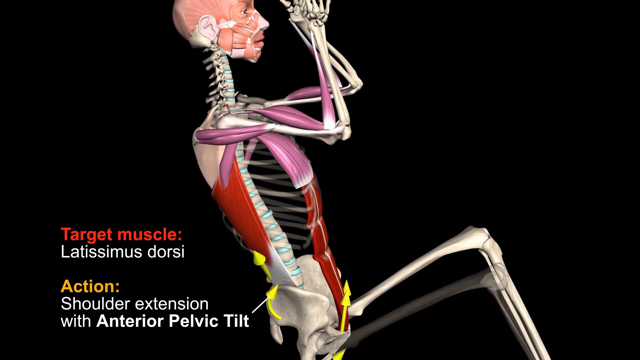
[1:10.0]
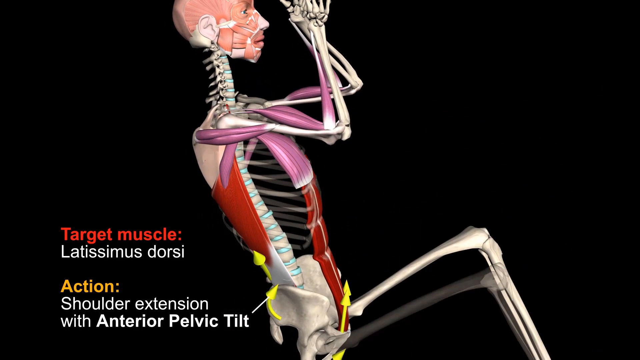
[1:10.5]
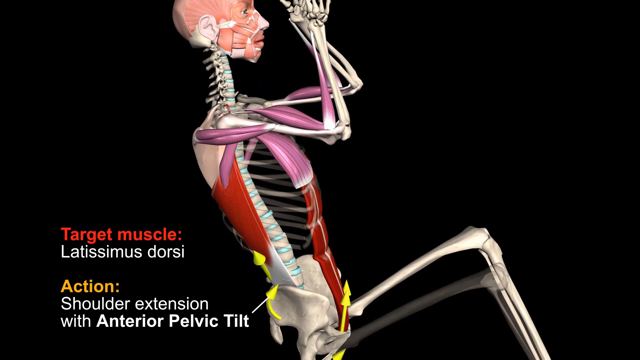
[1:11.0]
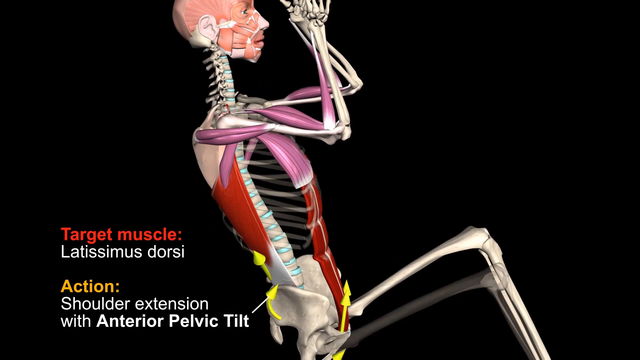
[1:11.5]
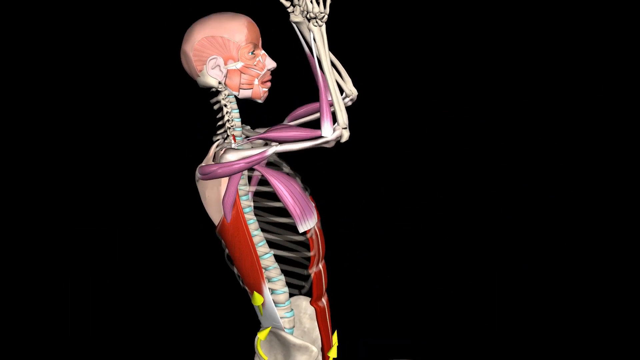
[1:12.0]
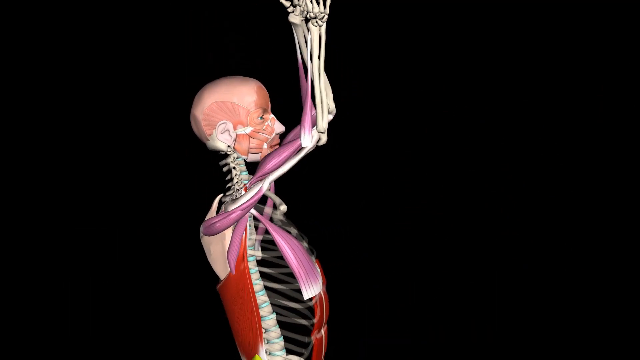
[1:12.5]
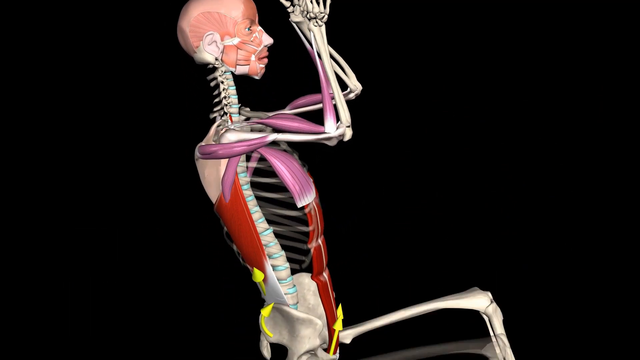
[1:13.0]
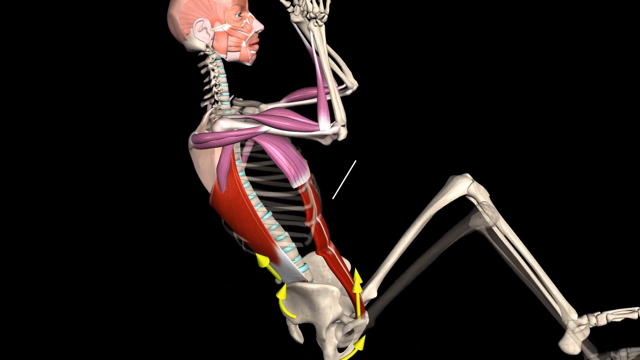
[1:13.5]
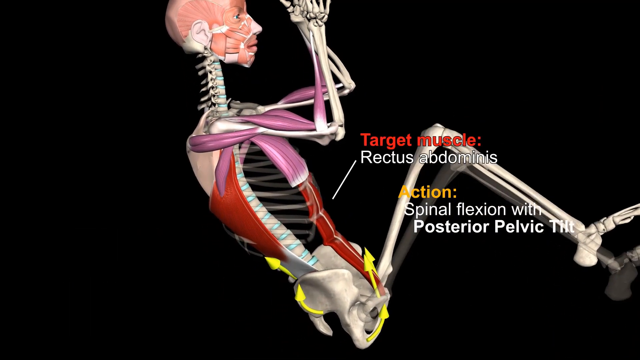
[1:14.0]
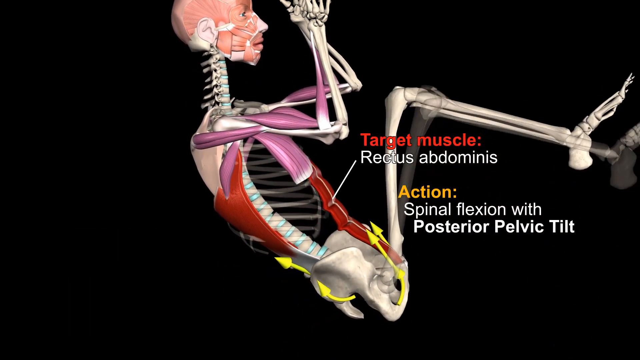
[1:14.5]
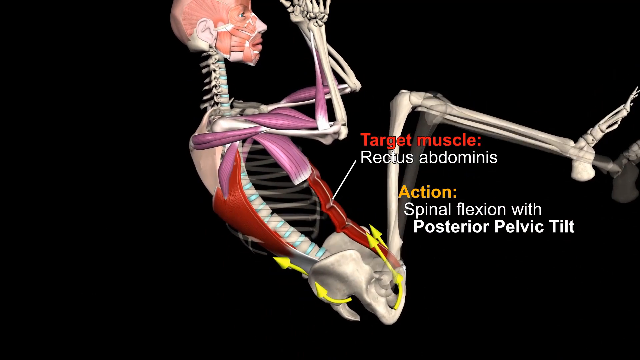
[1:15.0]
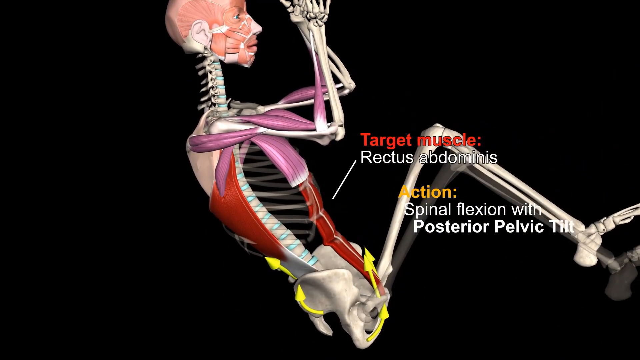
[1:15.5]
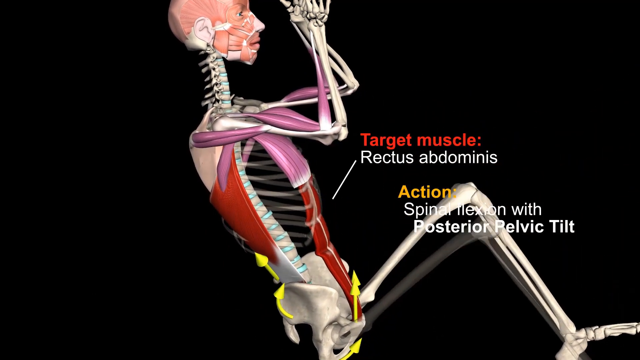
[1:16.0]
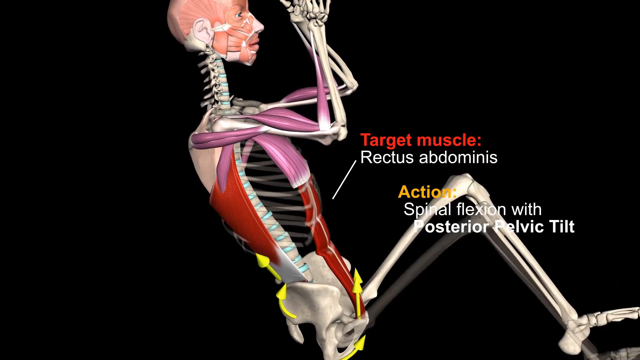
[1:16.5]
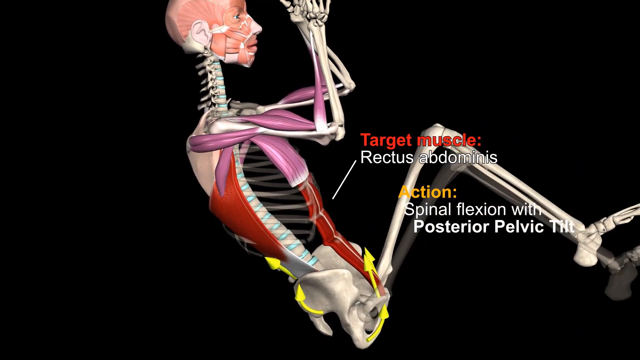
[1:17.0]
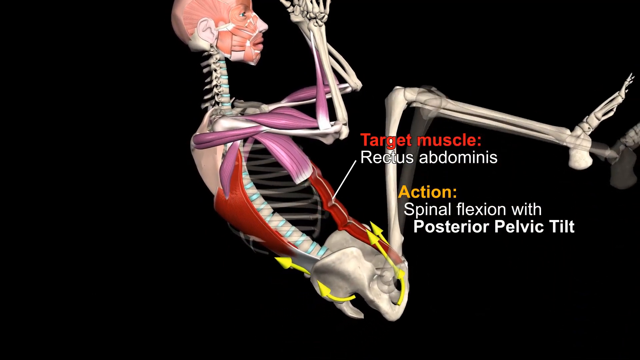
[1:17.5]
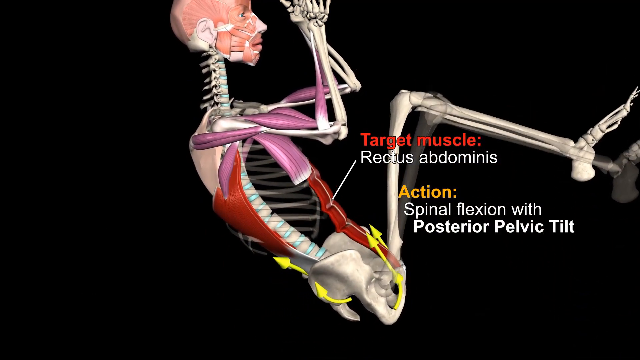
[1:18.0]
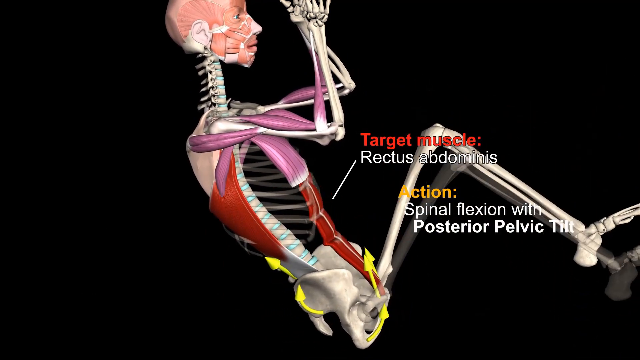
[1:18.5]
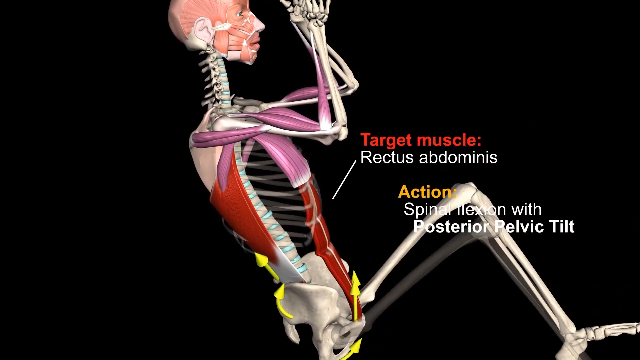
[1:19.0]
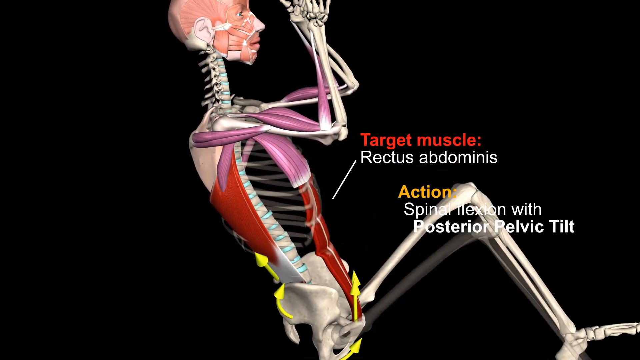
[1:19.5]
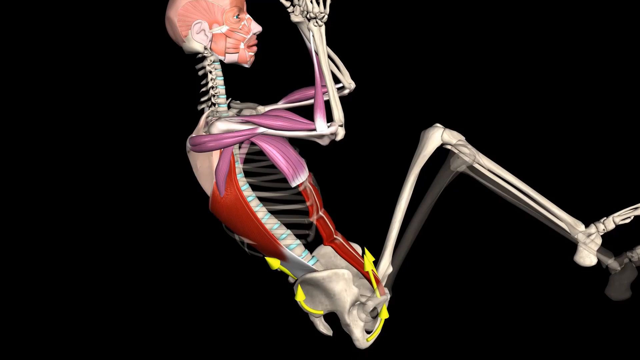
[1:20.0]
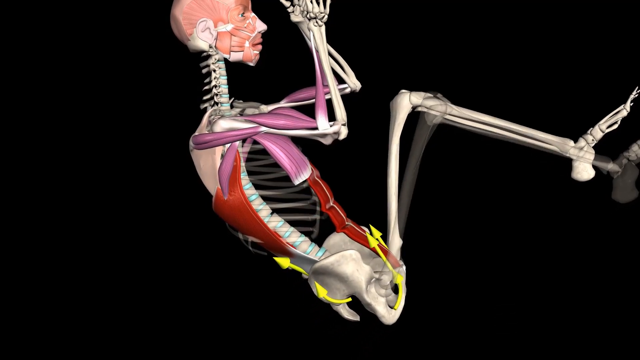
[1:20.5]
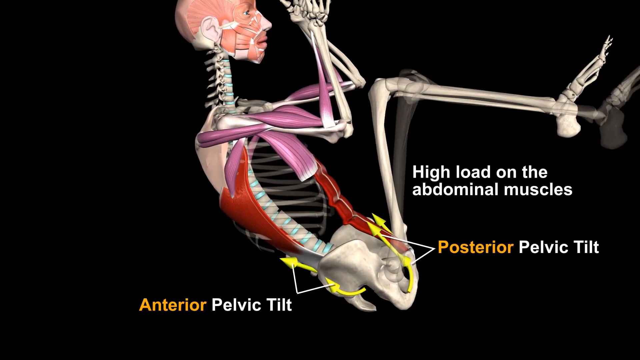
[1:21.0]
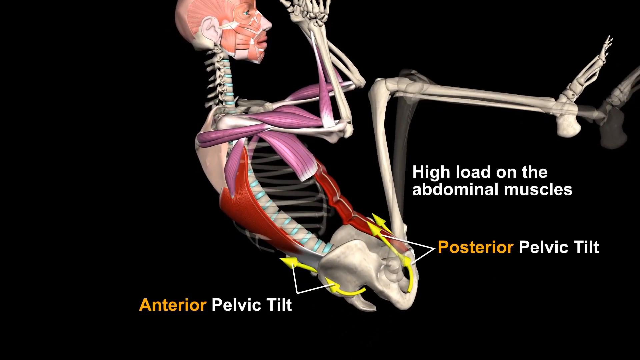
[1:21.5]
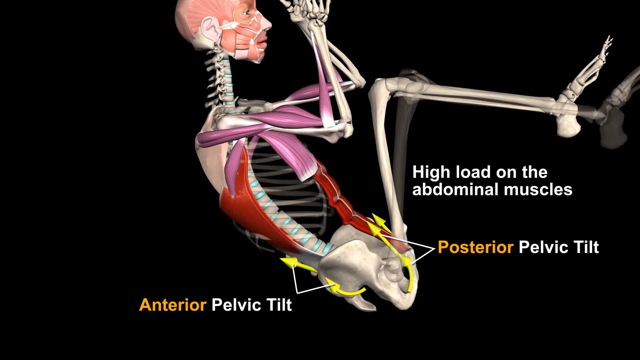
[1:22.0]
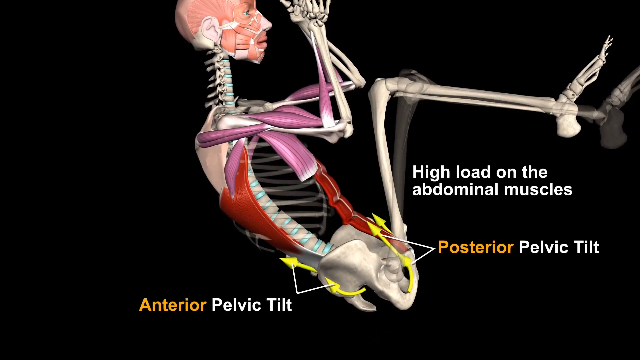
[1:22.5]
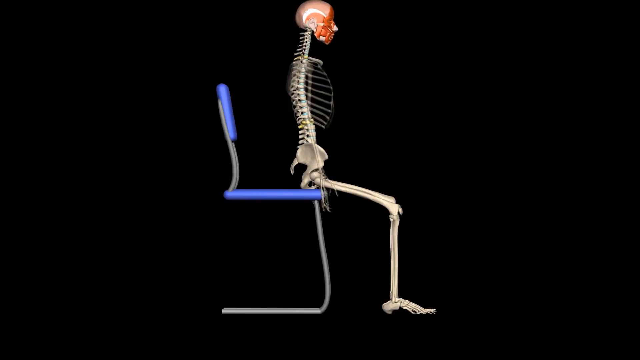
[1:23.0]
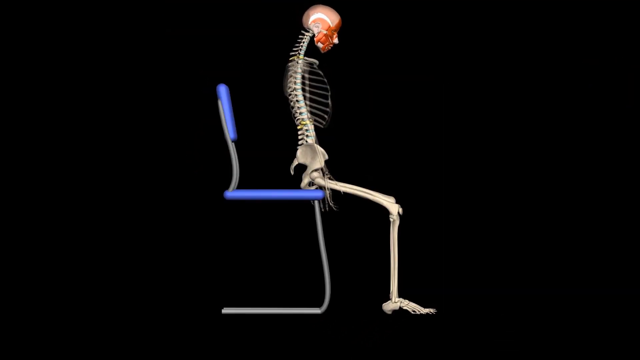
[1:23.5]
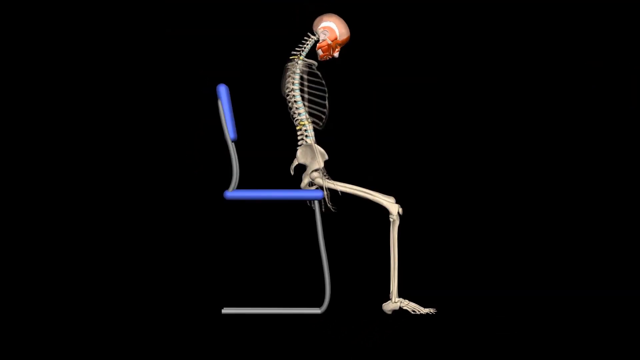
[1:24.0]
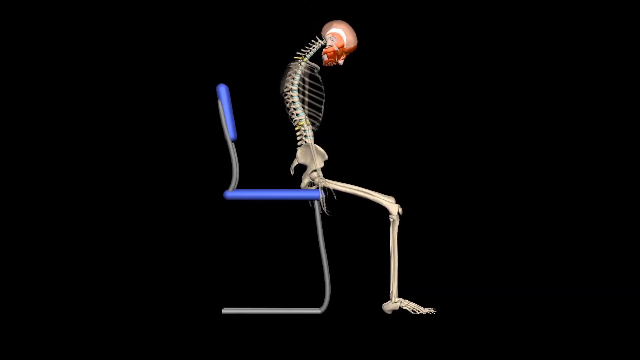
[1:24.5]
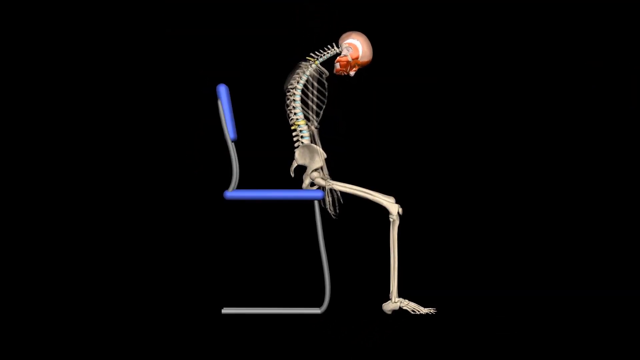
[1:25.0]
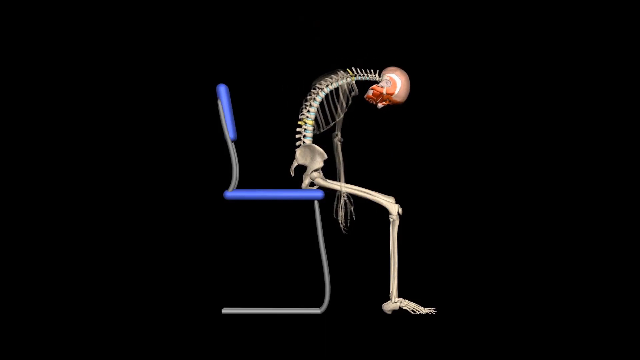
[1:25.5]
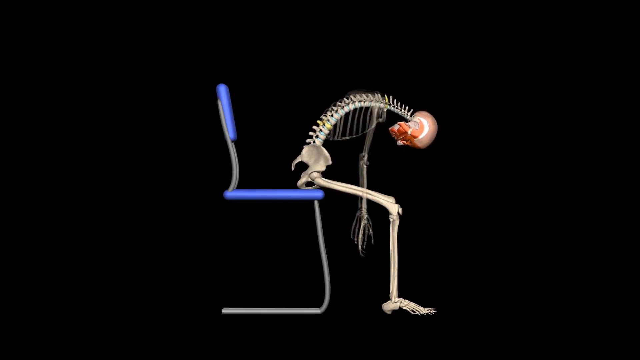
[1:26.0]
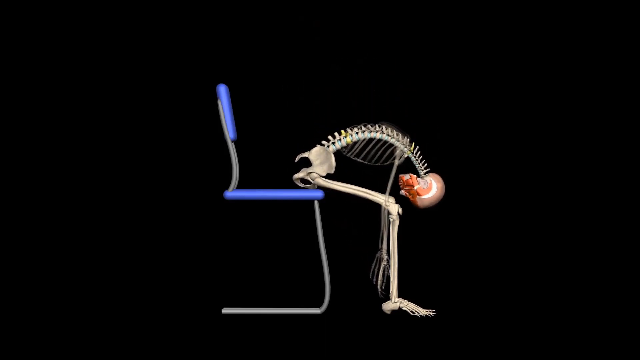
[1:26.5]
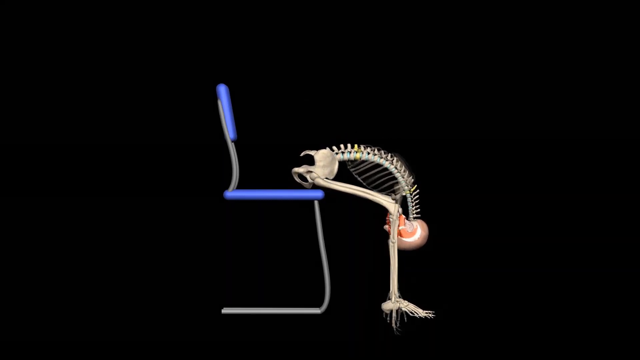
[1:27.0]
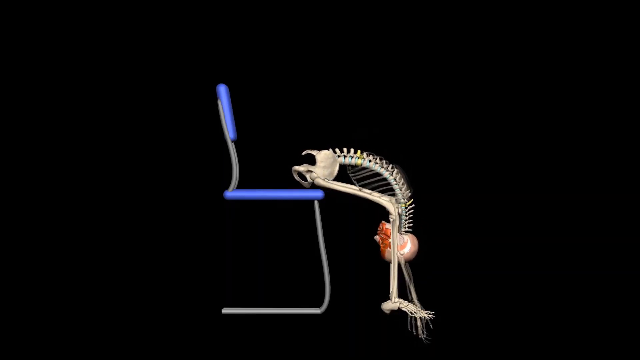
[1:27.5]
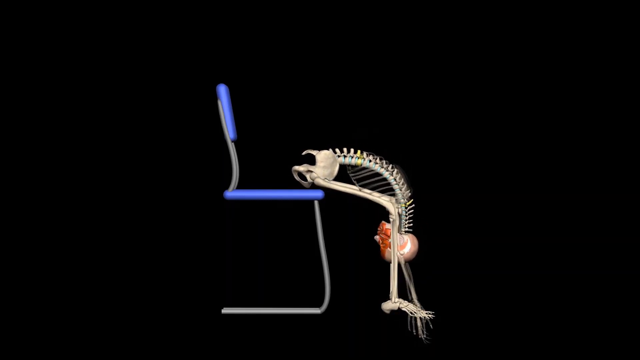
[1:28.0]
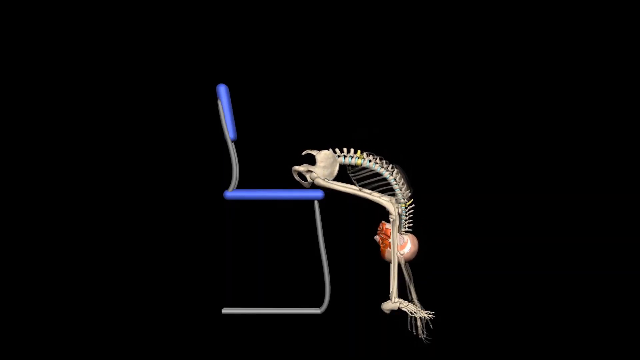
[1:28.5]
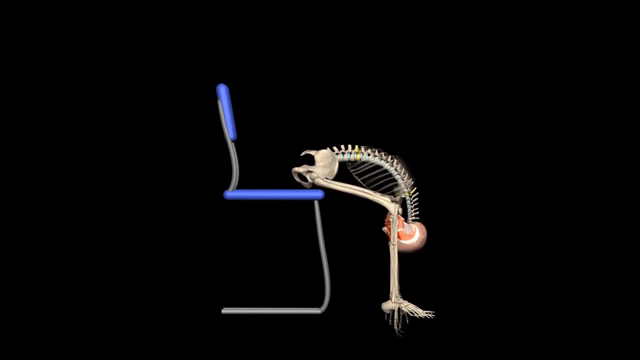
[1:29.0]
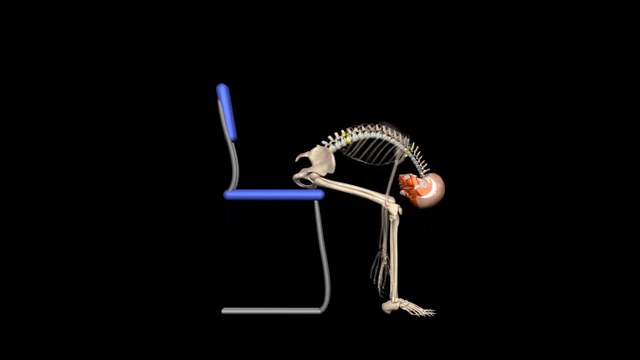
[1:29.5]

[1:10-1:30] A 3D computer-generated skeleton does a pull-up, holding on to a bar that is not quite visible at the top of the screen. It pulls itself up, bending its elbows and bending its knees so far that they almost touch its elbows. It then lowers itself and repeats the action over and over. Another shot then shows a skeleton sitting in a chair. This skeleton is almost all bones: the ribcage, spine, pelvis, leg bones and arm bones are visible, while the skull has muscles depicted on it in pink and red, and the nose is visible too. The chair has a gray back, gray legs and blue cushions, and the background is completely black. The skeleton sits upright on the very edge of the chair, then bows its head and kind of starts to lean forward with its arms dangling downward. It goes all the way down, its head falls between its legs, and its hands touch the ground. It holds the pose, then raises itself back into a sitting position. This is shown from a side view, with the bones outlined against the black background.